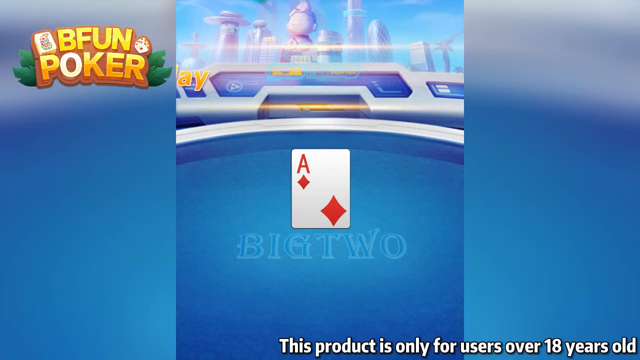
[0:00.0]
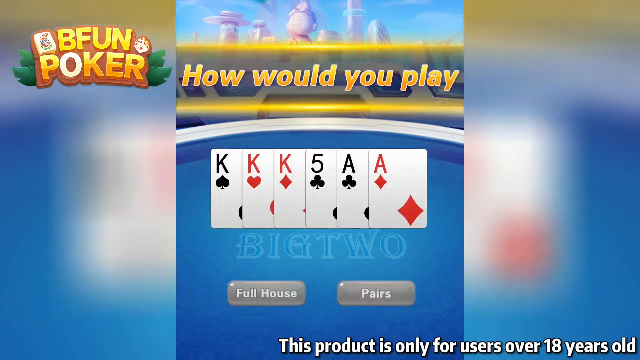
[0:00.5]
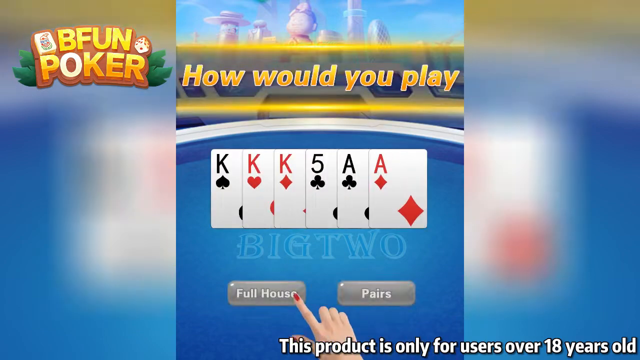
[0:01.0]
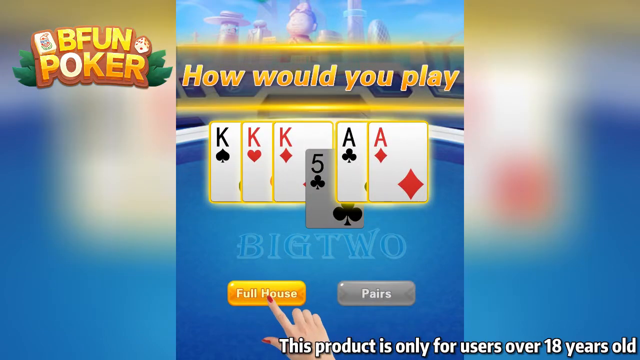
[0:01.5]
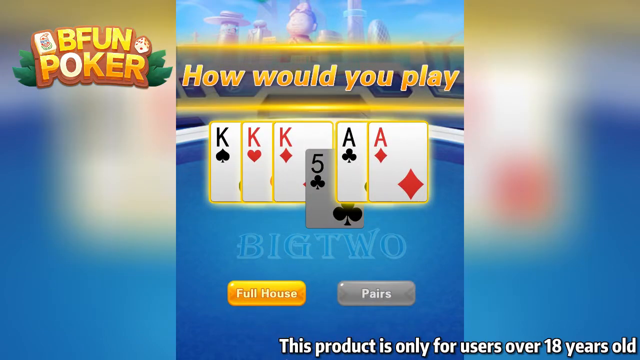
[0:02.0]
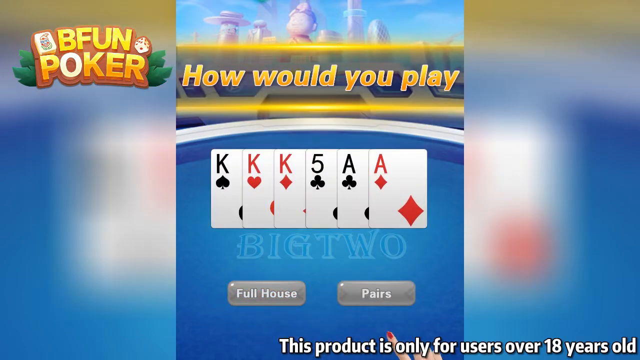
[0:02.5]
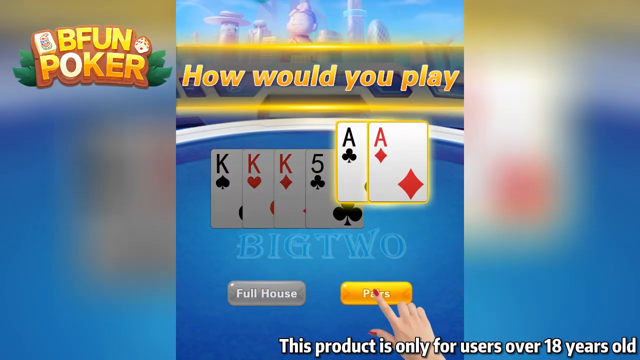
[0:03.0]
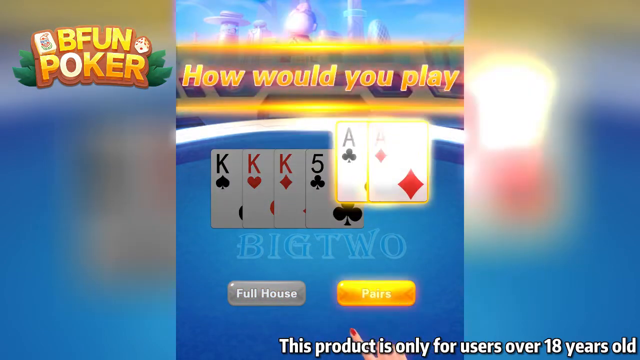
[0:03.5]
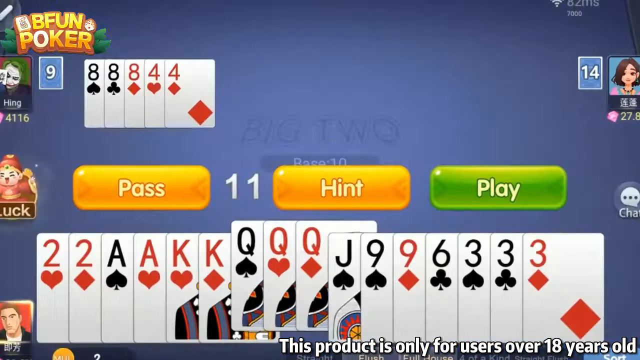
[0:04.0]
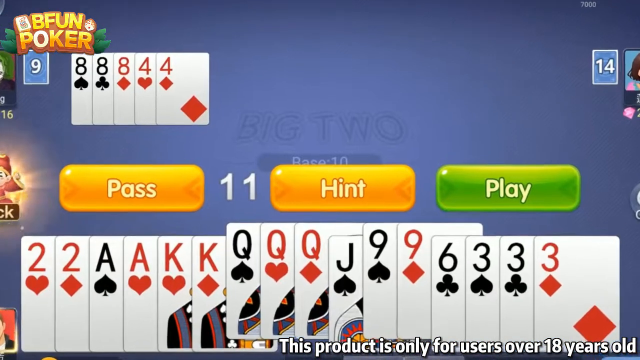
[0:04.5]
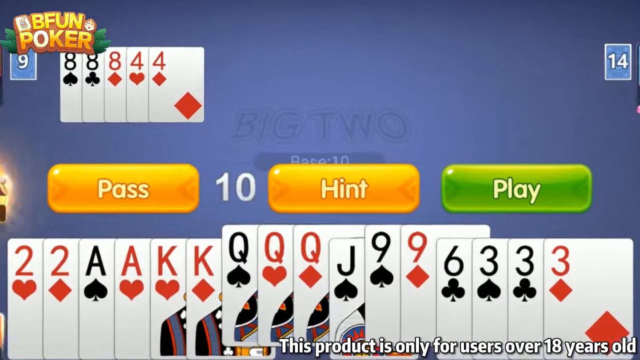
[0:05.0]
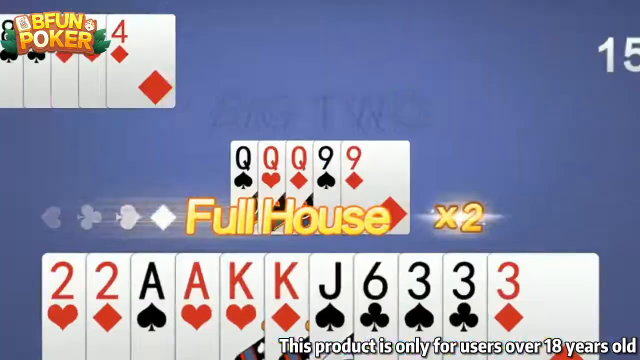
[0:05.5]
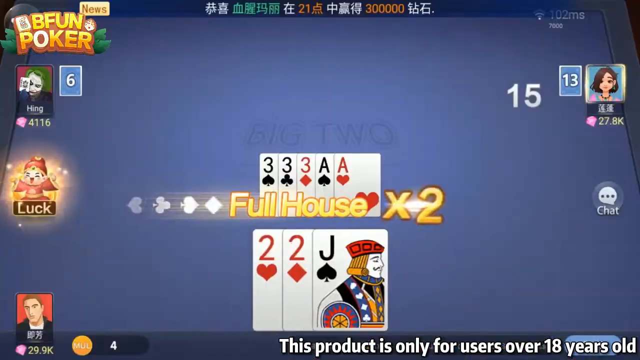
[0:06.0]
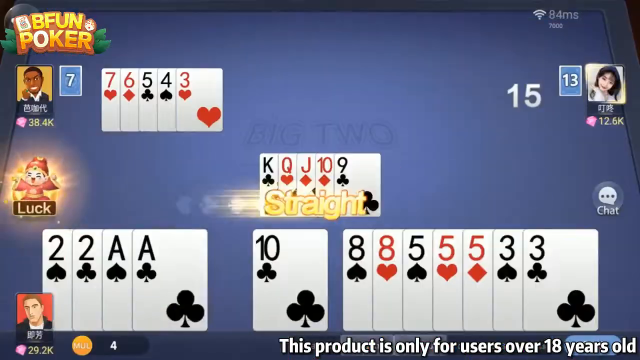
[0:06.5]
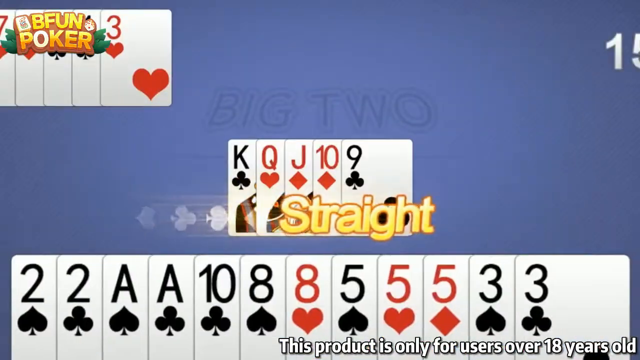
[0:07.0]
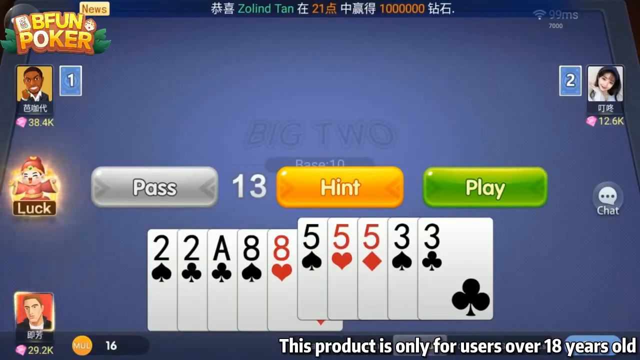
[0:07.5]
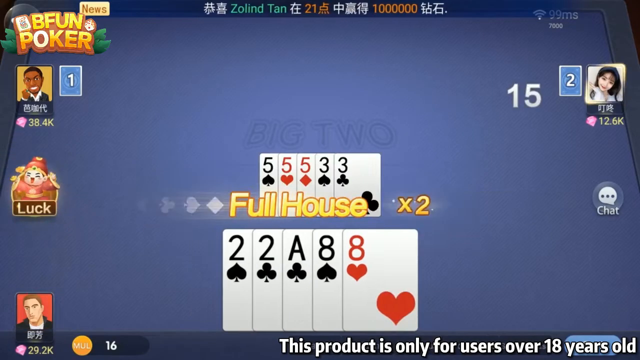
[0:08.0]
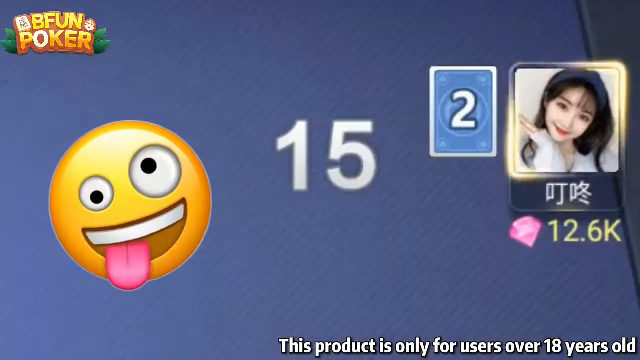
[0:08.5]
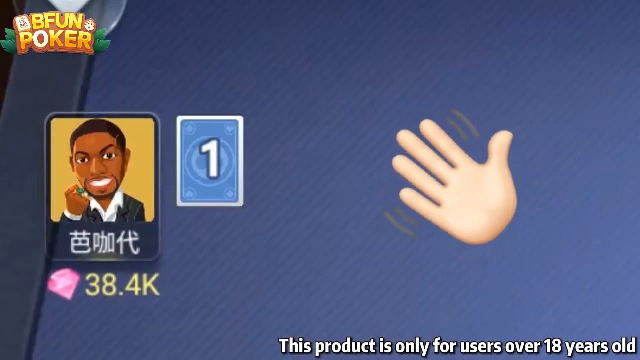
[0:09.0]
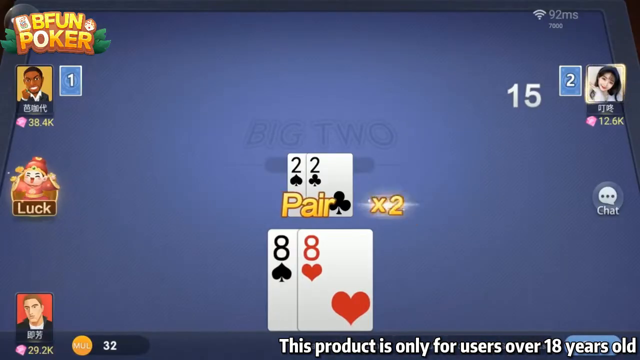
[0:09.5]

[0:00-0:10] This is a video for a poker game. On the left and right sides there is a border about two inches wide, with the actual video in the center. The border is a kind of bluish-looking sky with a little bit of gray cloud at the top, kind of blurred out. At the bottom, text reads "this product is only for users over 18 years old," and in the top left corner it says "Be Fun Poker." A couple of little plants poke out the side. In the center, a spaceship-looking thing fills the top third, and below that is a blue background. It starts with an ace of diamonds, with "big two" underneath it. The cards then spread out across the top, showing how to play: a king of spades, king of hearts, king of diamonds, five of clubs, ace of clubs and ace of diamonds. Every card except the five is raised up and lit up; the five is kind of faded, as if that card is not being used. At the bottom, "full house" appears in a yellow border, and on the right side "pairs" appears in a gray border. A hand comes up from the bottom and taps on full house. The cards raise up, and then a different area of the cards shows how full houses and straights are played. A couple of different icons of the people who would be playing are shown.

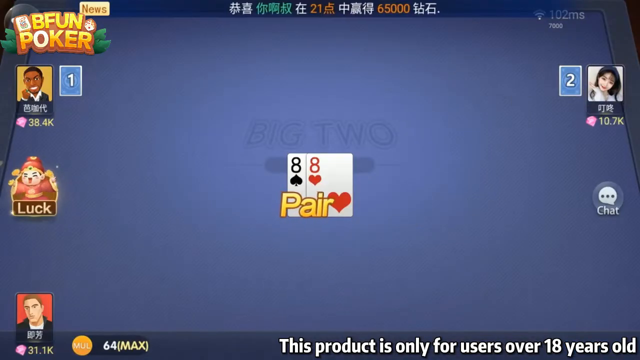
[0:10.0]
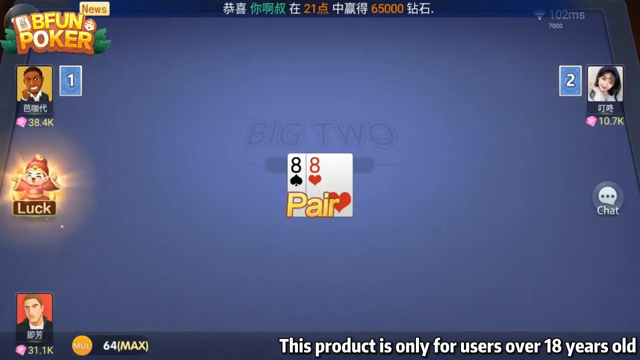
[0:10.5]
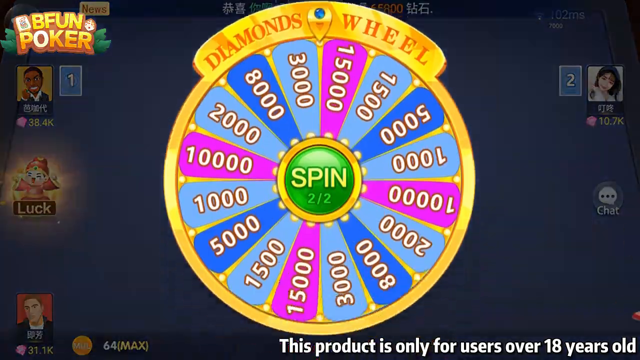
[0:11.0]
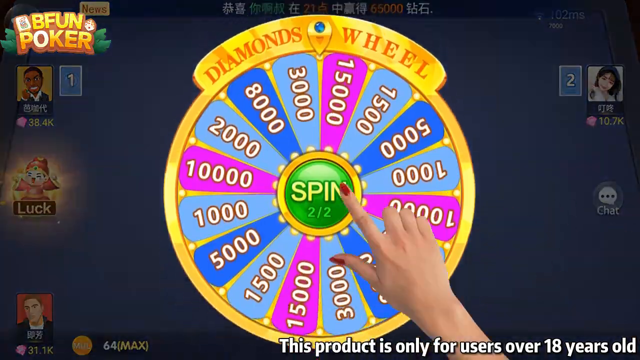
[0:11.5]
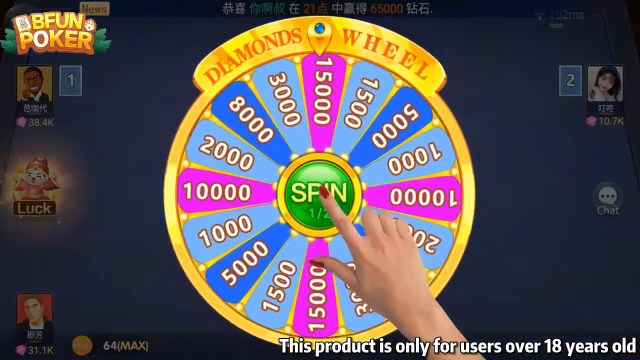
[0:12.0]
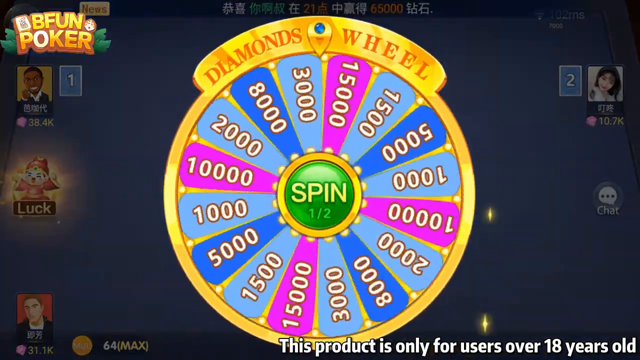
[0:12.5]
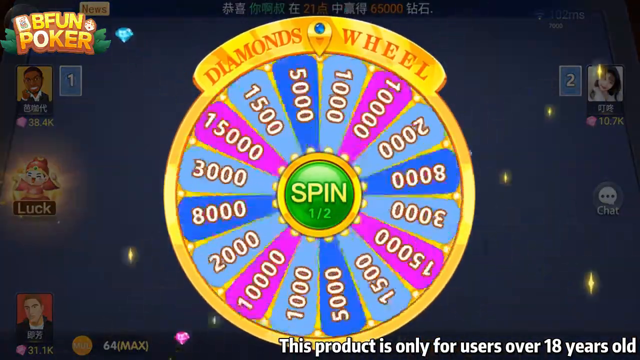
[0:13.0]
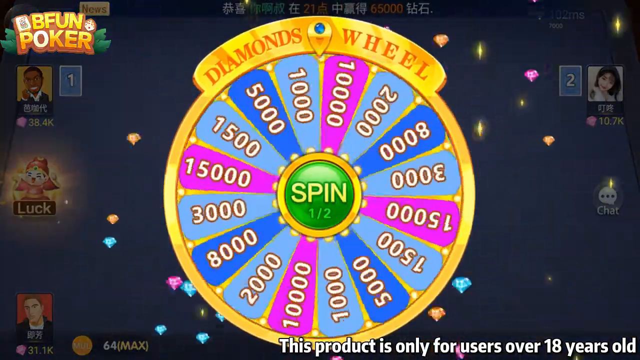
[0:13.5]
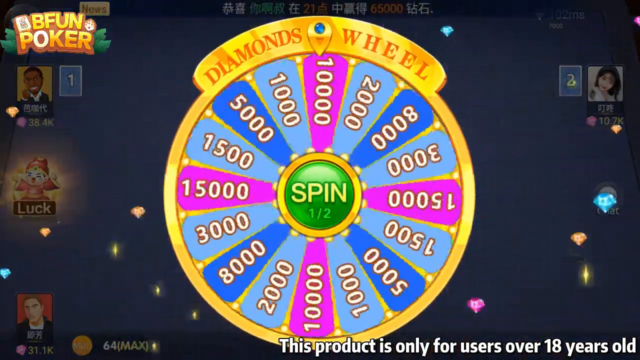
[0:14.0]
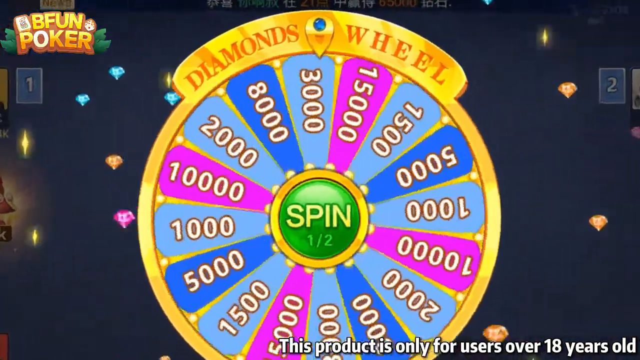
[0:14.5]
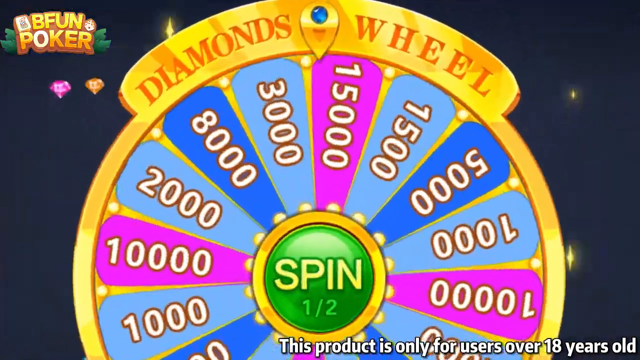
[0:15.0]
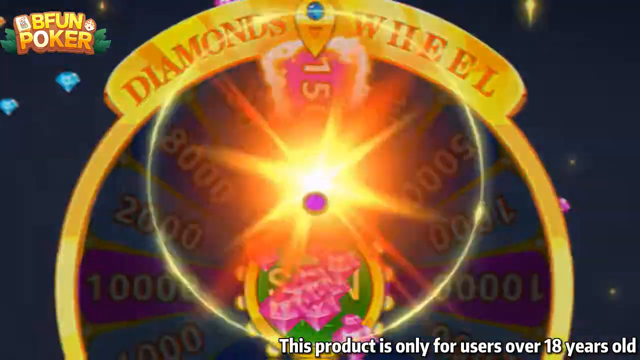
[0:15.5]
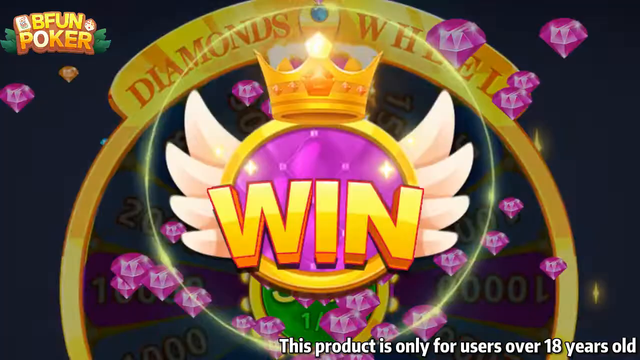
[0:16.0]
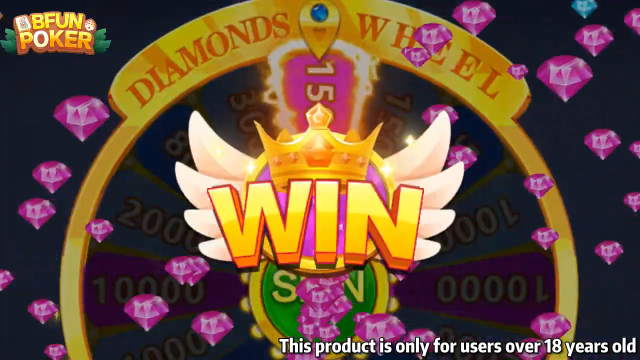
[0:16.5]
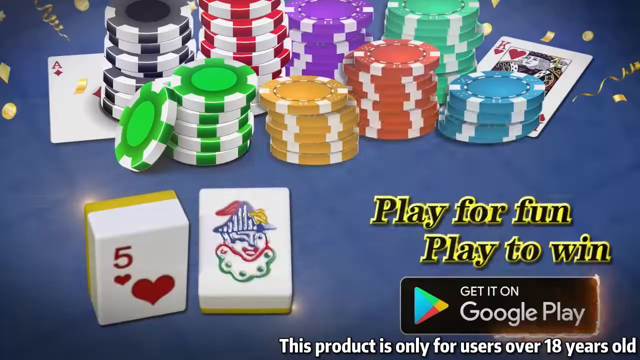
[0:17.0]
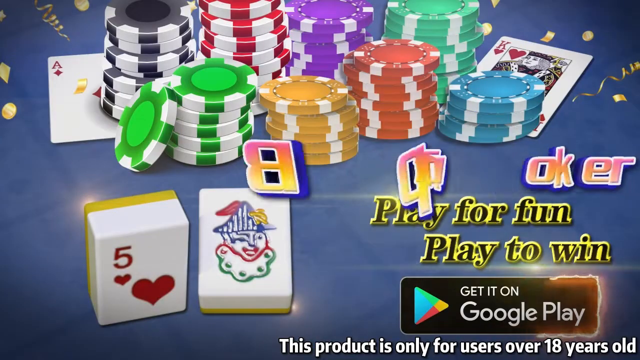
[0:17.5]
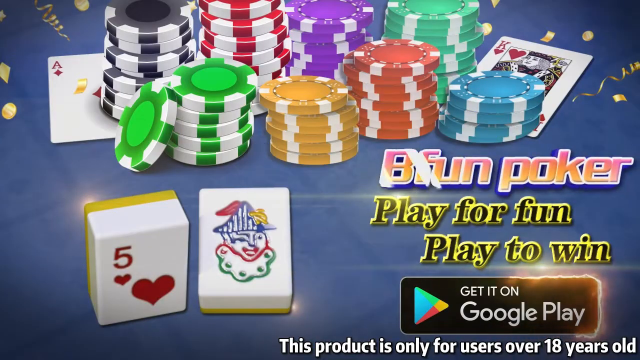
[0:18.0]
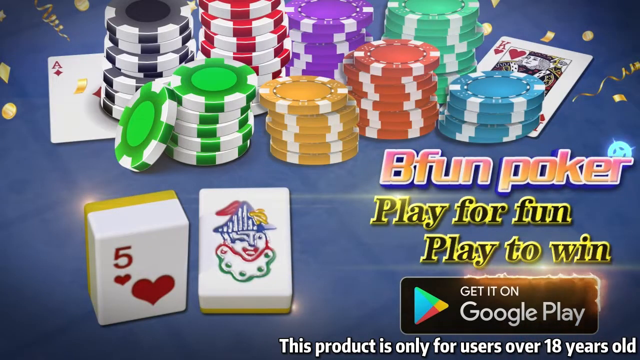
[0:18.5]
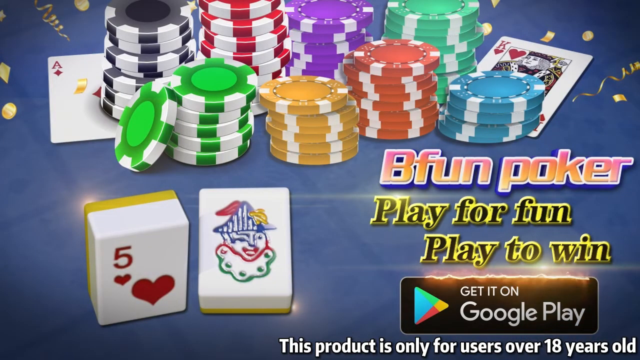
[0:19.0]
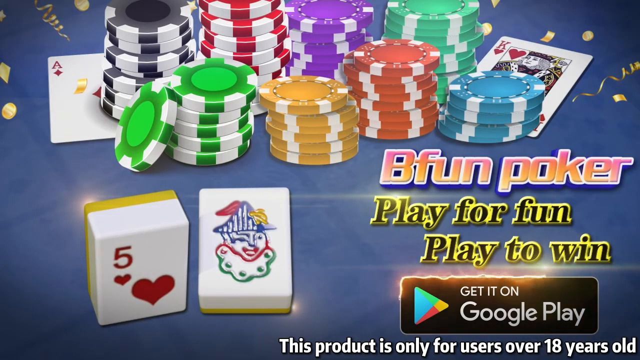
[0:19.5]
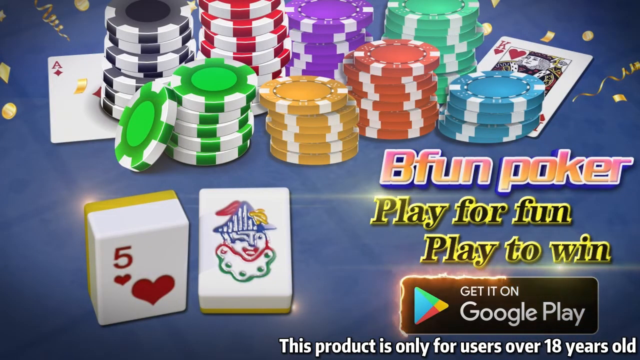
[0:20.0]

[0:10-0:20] The video starts with a wide look at a playing table. Across the top are some numbers and some foreign language. On the left side there is a black icon for a player, and below it another player in kind of a red outfit. A regular-looking white man is at the bottom left, and an Asian lady is in the center. There are some cards, two eights, and then a big spinning wheel comes up. A hand comes in from the bottom and spins the wheel. "Diamond wheels" appears across the top, and then it flashes up that the player won. Next, a bunch of chips is scattered across the top in the back, about two inches from the left. There are black and white chips, then red and white, purple and white, and green and white; in front of them on the left side are dark green and white, then golden and white, then red and white chips. These are mostly red, while the other ones are mostly white. A small stack of teal and white chips is on the right side. Half of a king of hearts is visible, and on the left side is an ace of diamonds. At the bottom are a couple of cards, a joker and a five of hearts. In the bottom right corner is the name of the game with "play for fun, play to win," followed by where the game can be downloaded on Google Play.